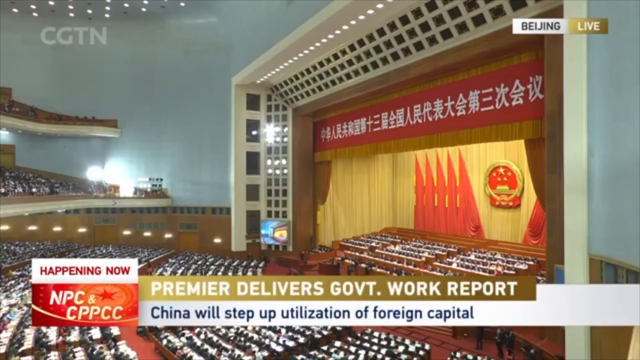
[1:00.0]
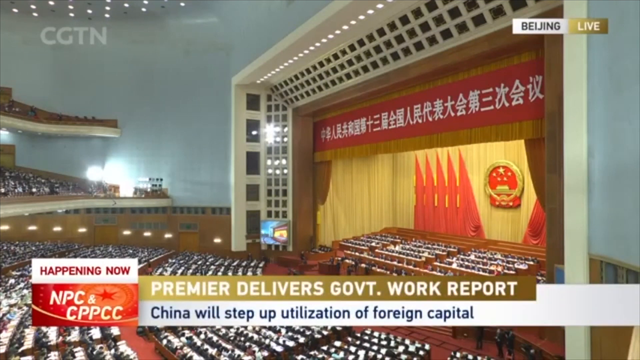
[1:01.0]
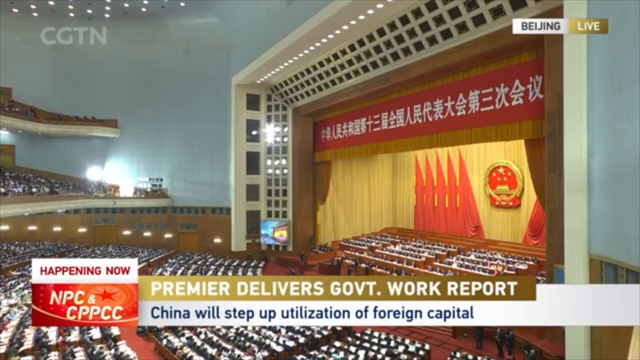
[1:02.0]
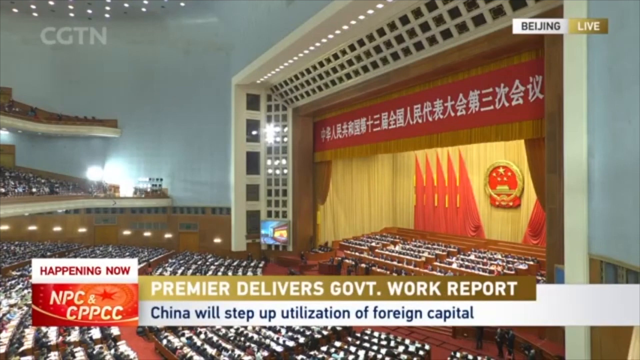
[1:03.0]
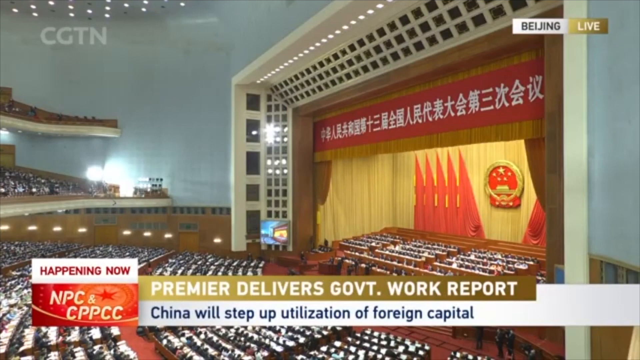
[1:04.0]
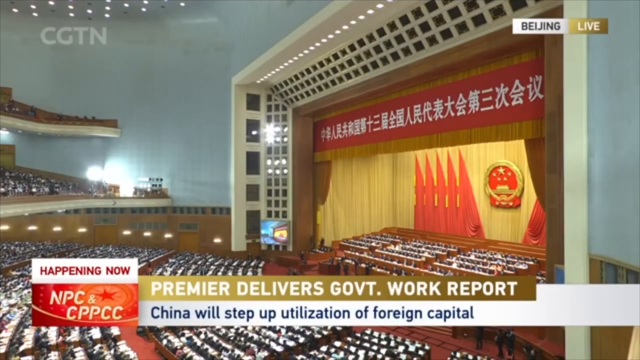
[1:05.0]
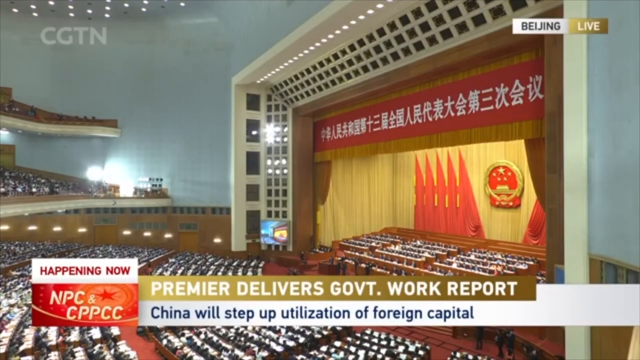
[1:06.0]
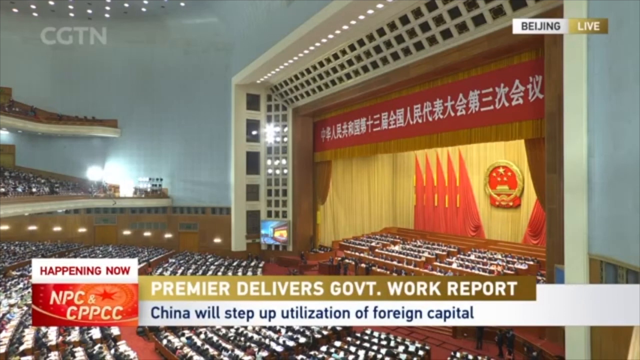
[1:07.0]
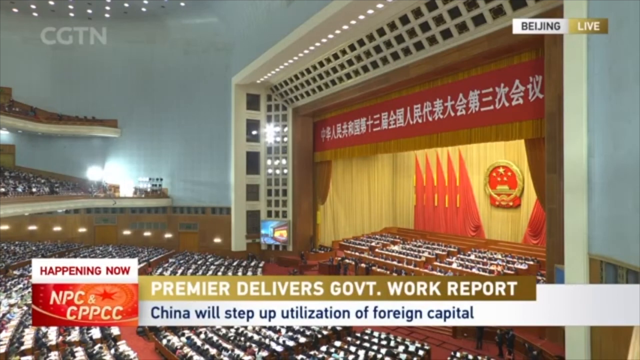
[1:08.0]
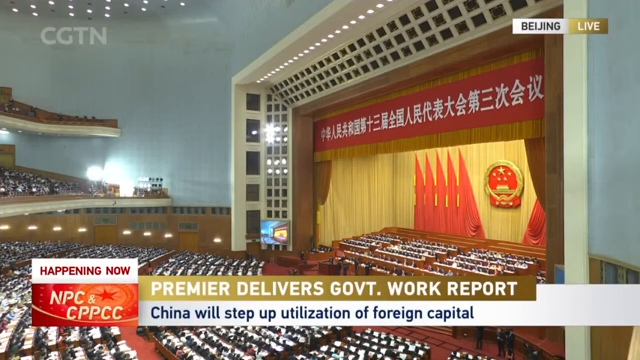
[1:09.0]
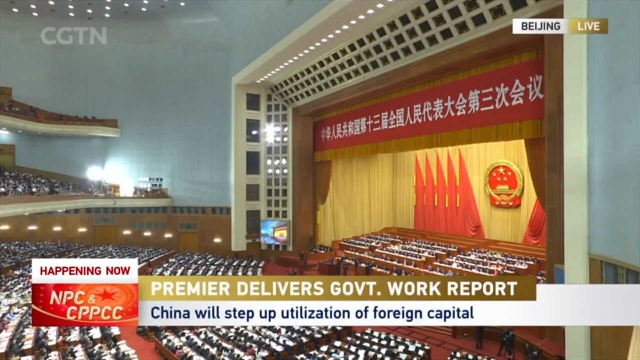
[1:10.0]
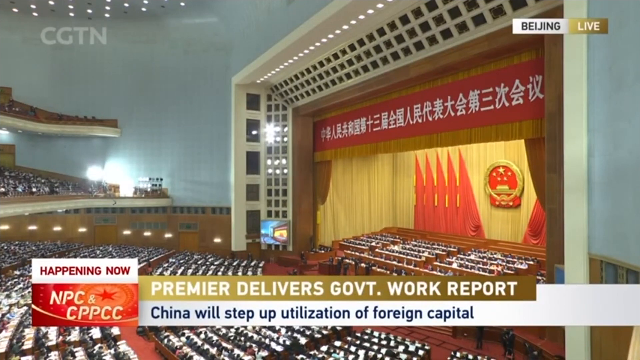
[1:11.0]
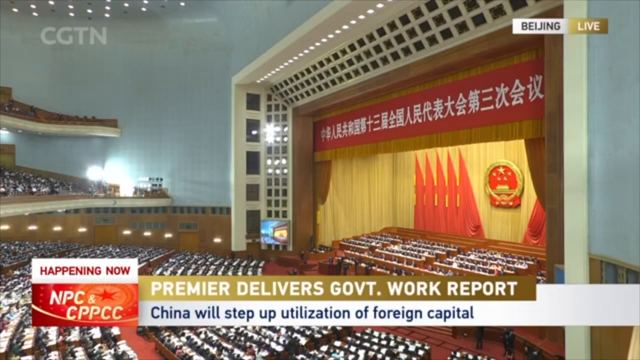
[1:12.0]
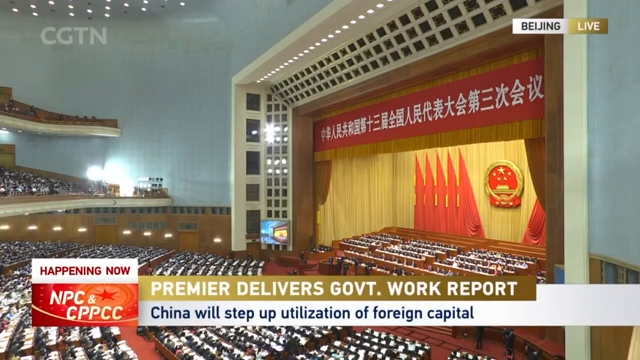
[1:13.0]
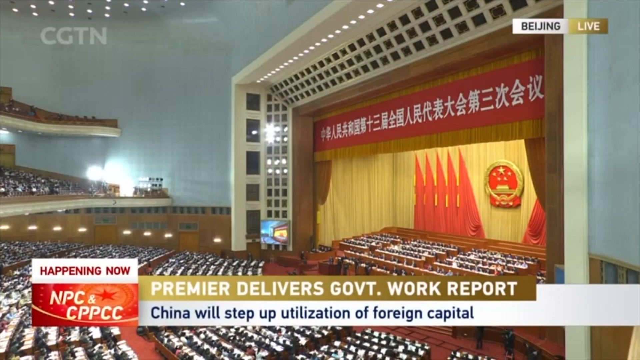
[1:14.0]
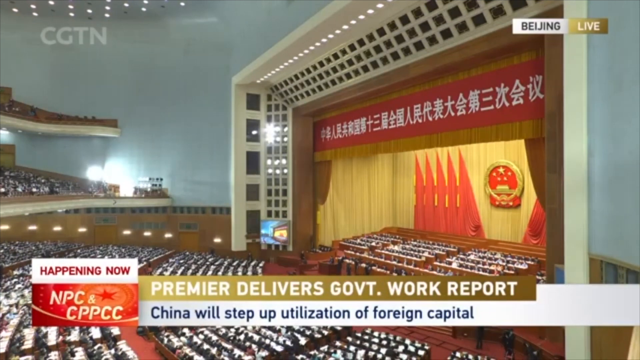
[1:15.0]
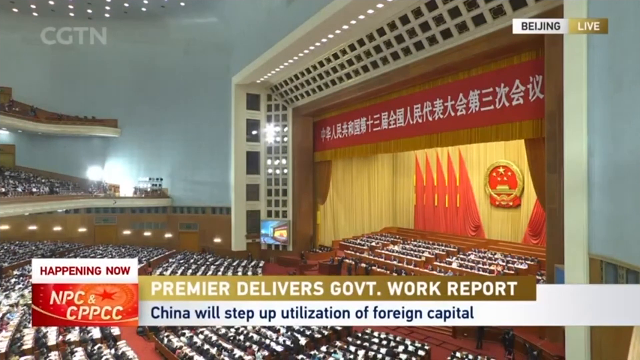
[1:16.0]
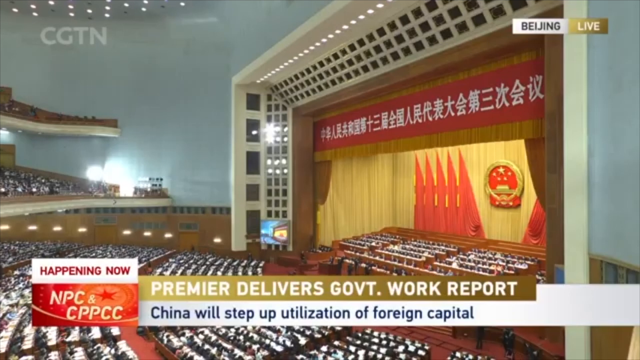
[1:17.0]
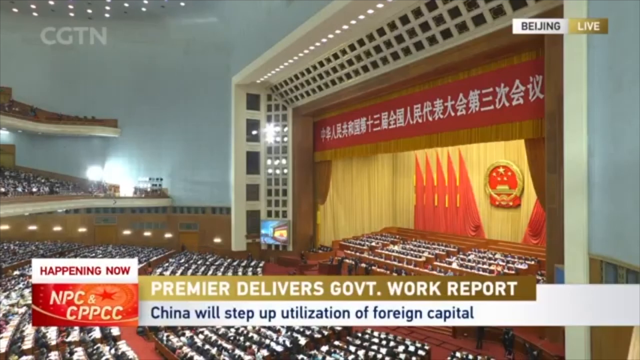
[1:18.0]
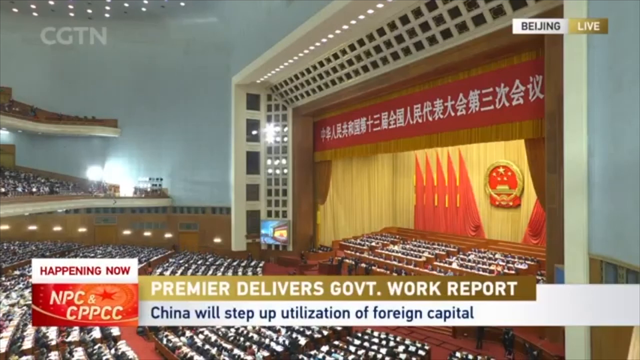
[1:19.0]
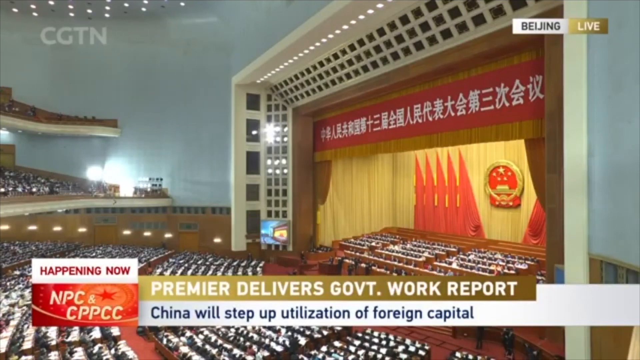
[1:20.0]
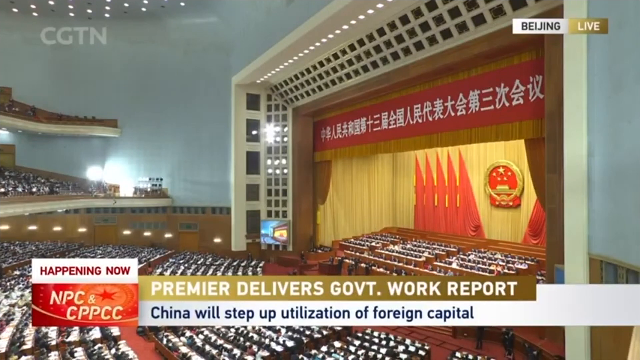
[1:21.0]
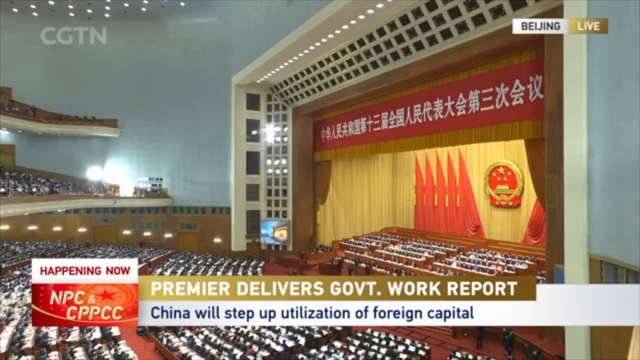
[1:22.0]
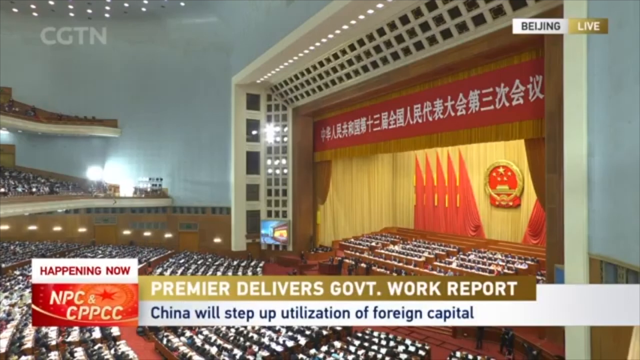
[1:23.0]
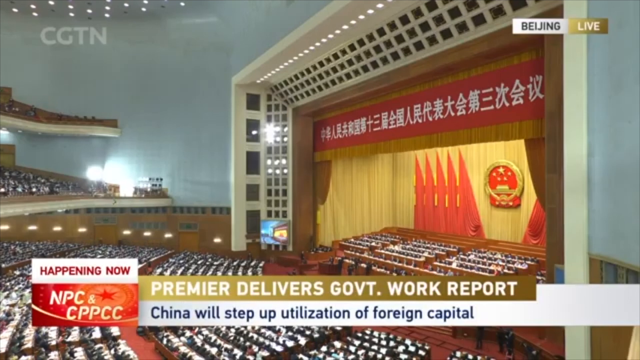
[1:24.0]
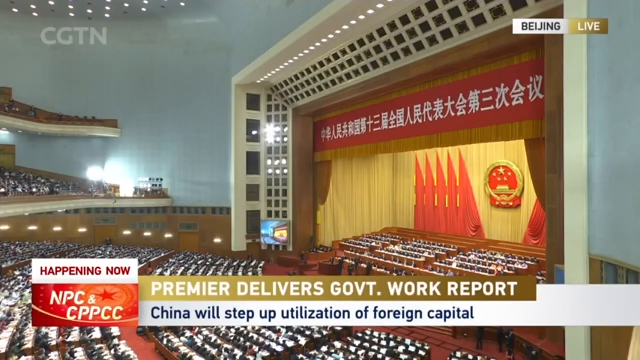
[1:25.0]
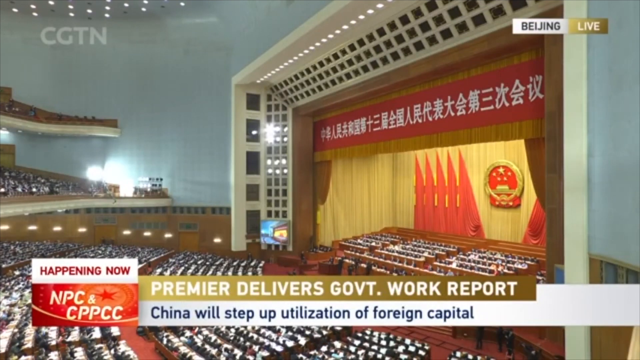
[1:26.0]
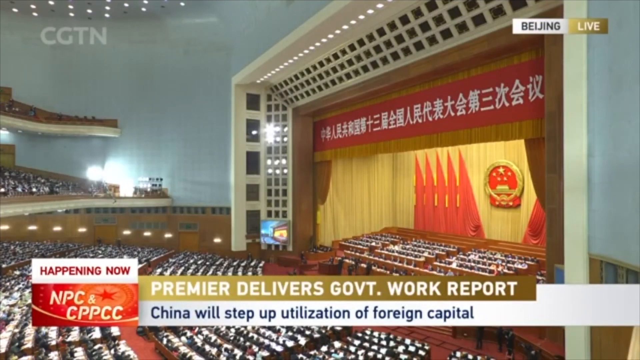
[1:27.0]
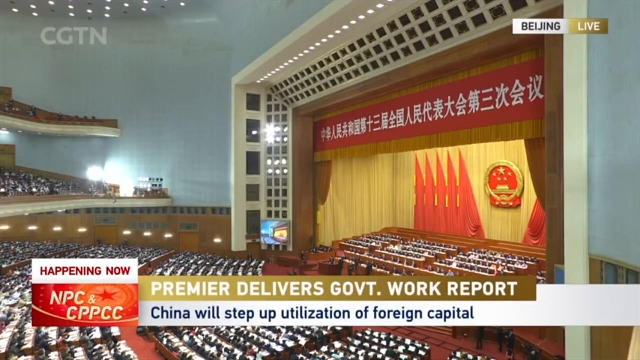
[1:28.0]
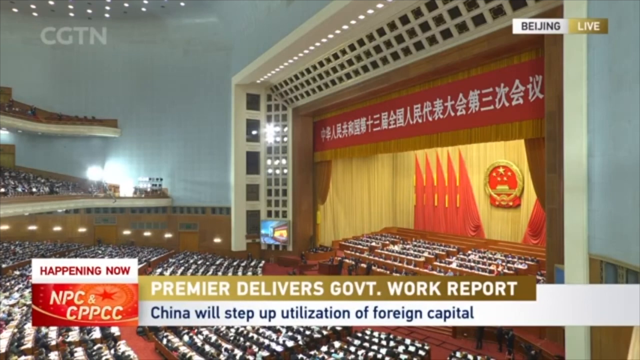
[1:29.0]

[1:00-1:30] The wide view of the building shows the front of the stage. The opaque white "CGTN" logo is in the top left, and the lower third changes to "China will step up utilization of foreign capital", below the "Premier delivers government work report" text that has been there the whole time. The scene keeps looking down at the government chamber, and the camera angle does not change during the scene. The live callout in the top right shows white lettering, with "Beijing" in black lettering to its left. The walls of the building have more of a bluish-gray look.